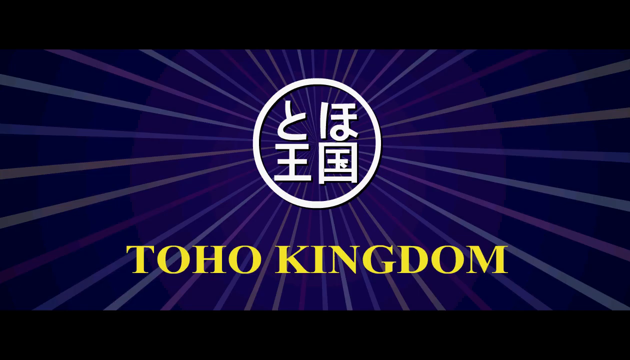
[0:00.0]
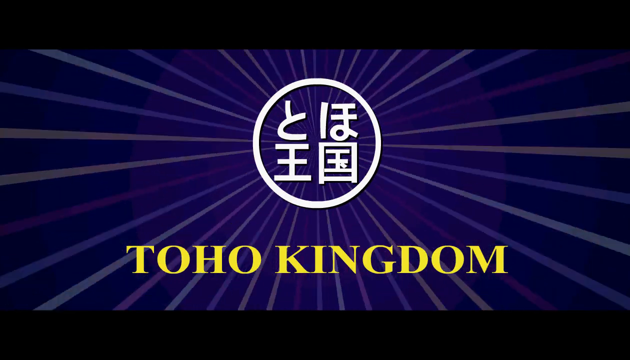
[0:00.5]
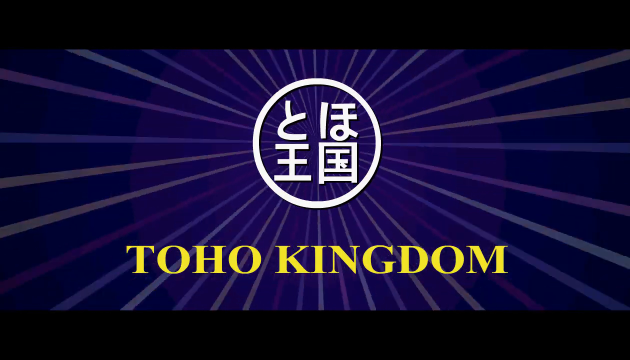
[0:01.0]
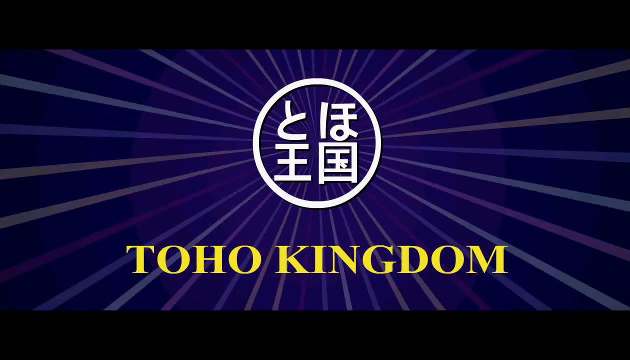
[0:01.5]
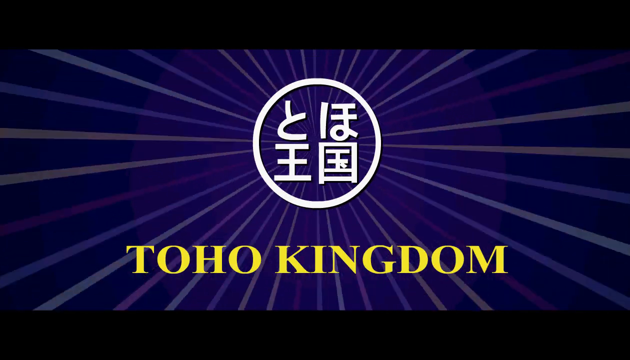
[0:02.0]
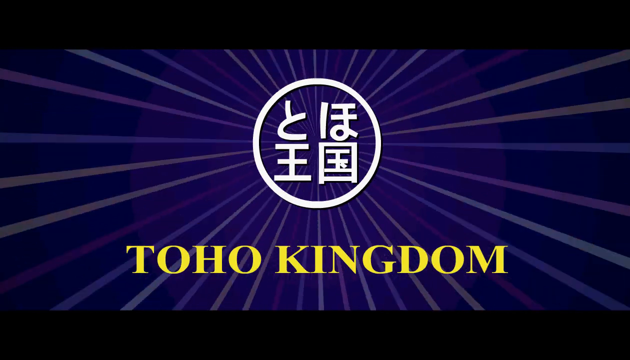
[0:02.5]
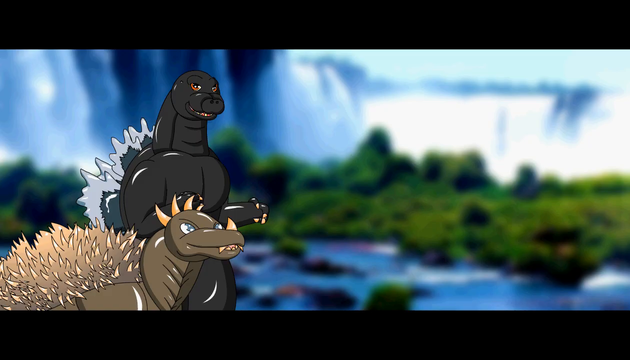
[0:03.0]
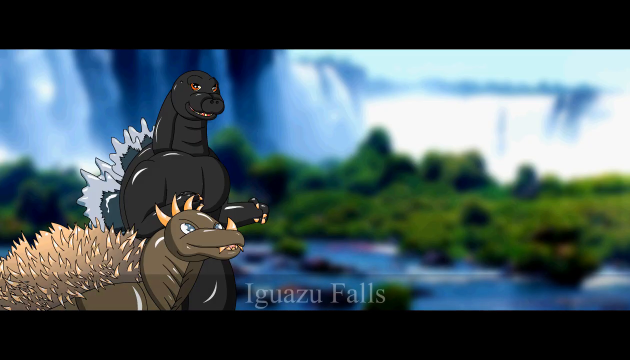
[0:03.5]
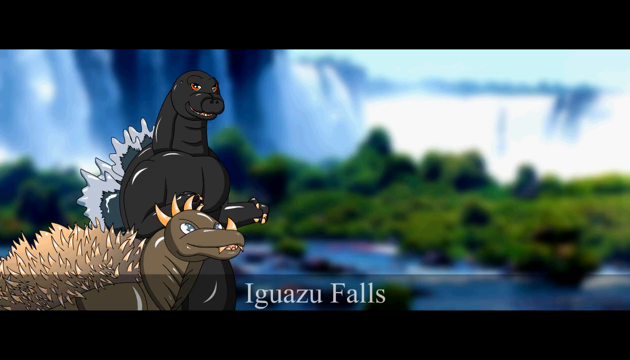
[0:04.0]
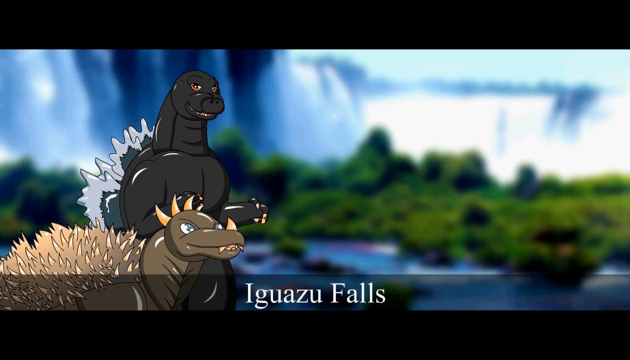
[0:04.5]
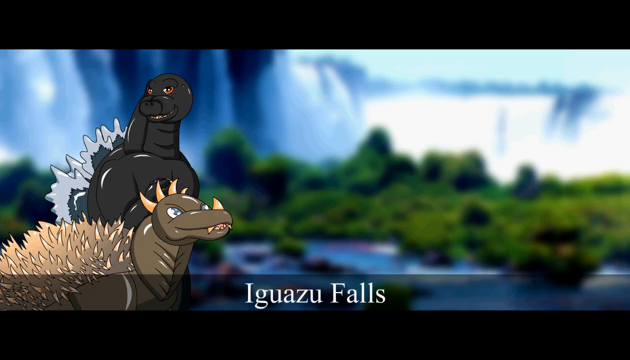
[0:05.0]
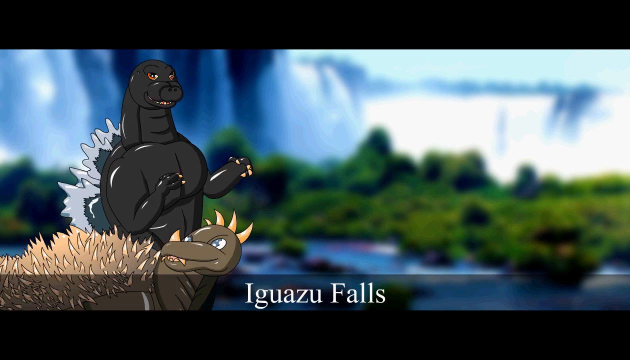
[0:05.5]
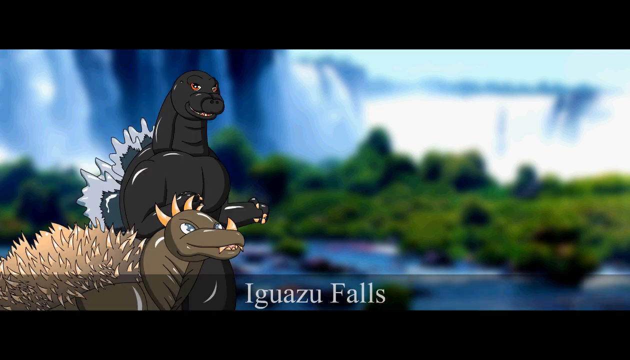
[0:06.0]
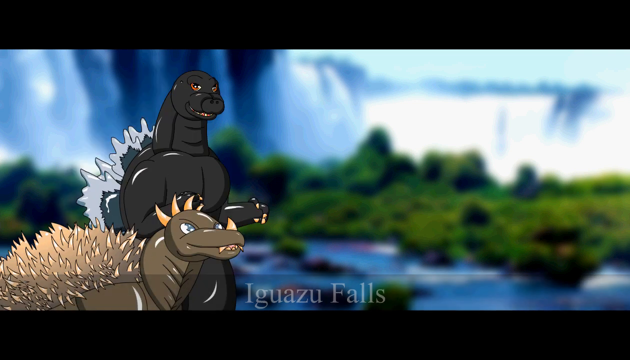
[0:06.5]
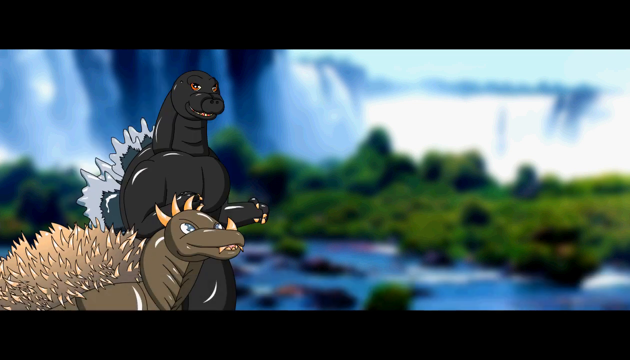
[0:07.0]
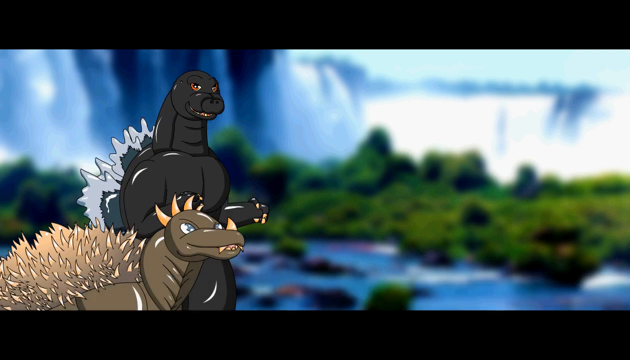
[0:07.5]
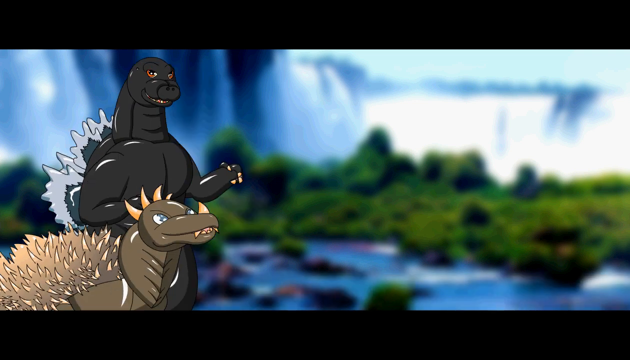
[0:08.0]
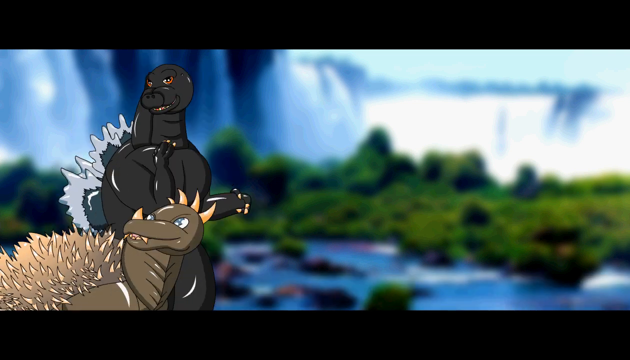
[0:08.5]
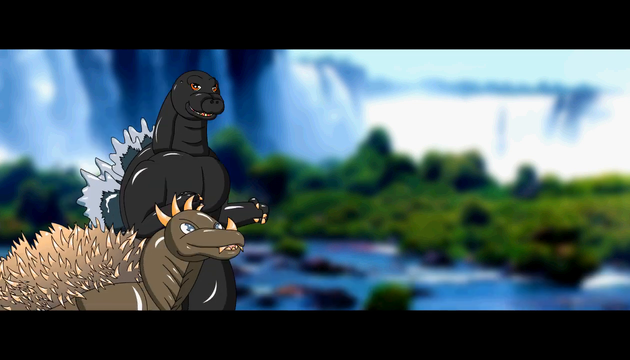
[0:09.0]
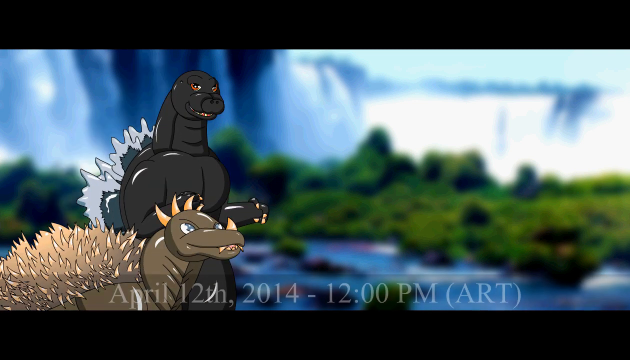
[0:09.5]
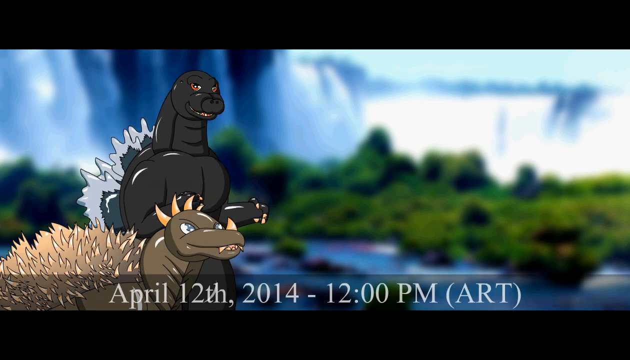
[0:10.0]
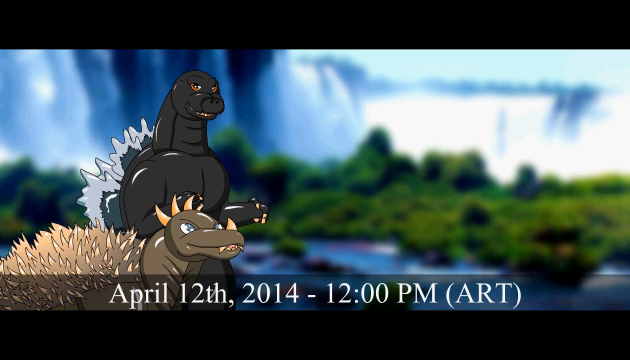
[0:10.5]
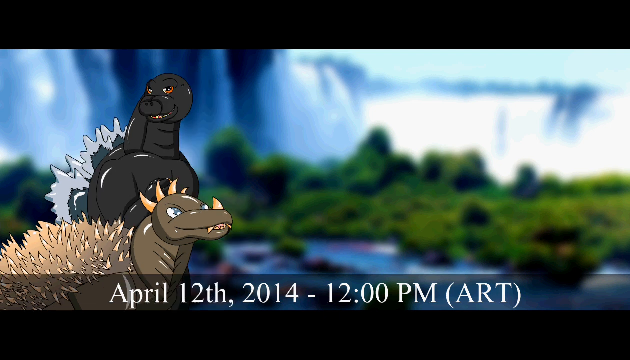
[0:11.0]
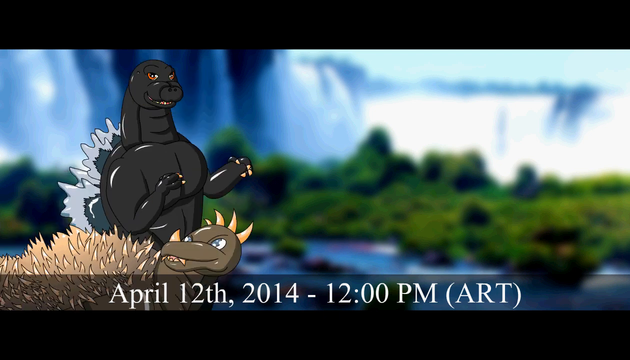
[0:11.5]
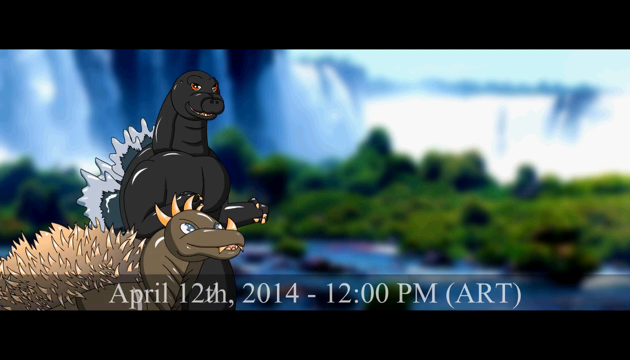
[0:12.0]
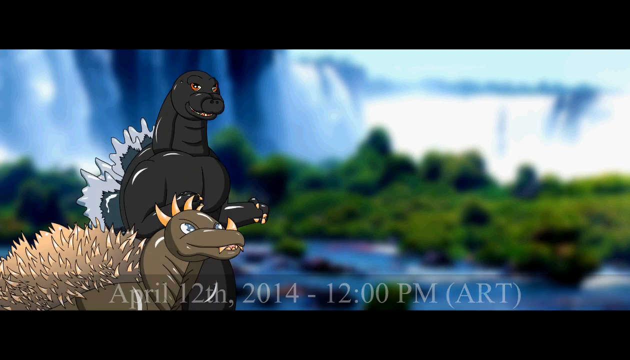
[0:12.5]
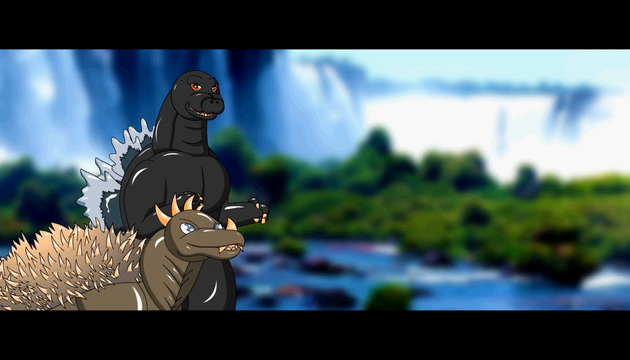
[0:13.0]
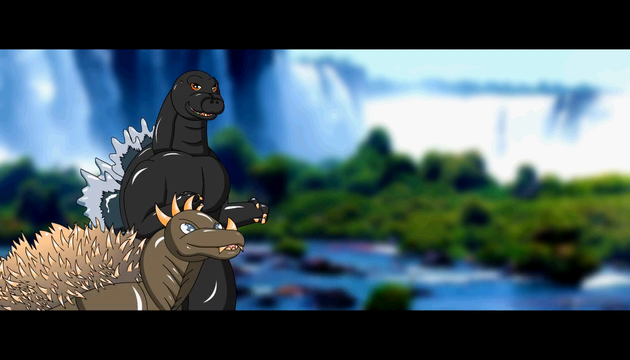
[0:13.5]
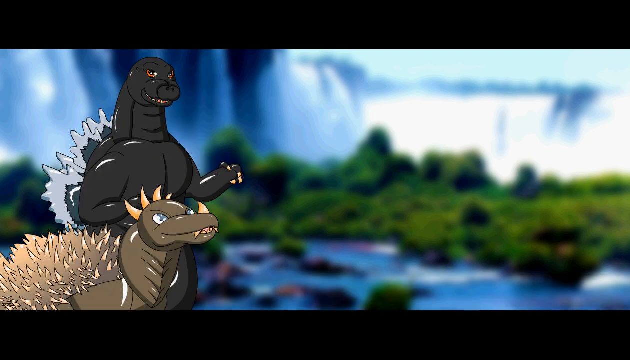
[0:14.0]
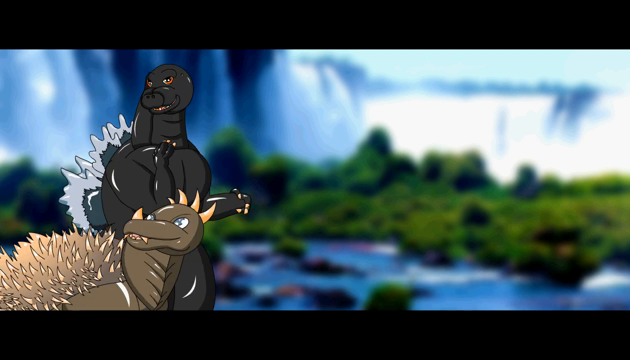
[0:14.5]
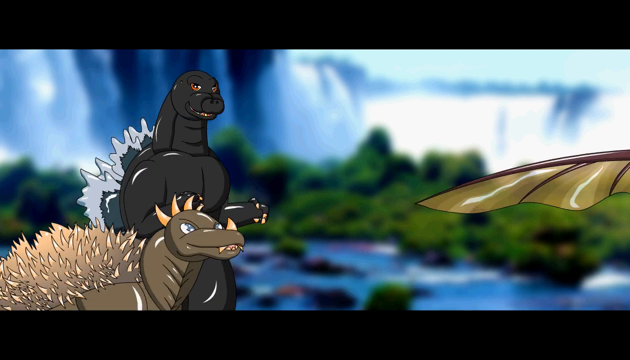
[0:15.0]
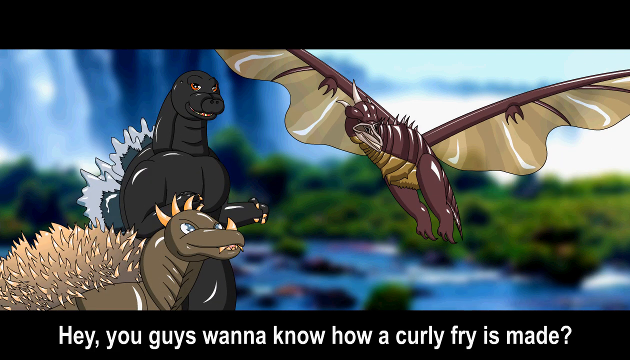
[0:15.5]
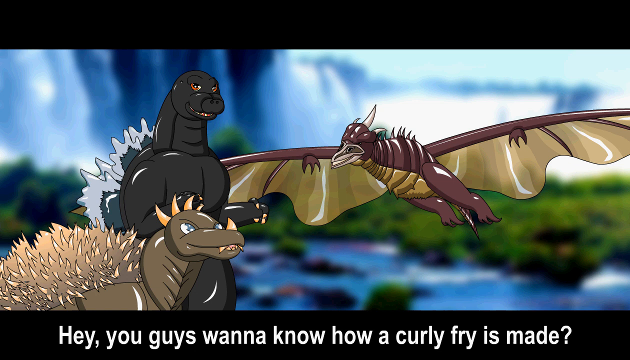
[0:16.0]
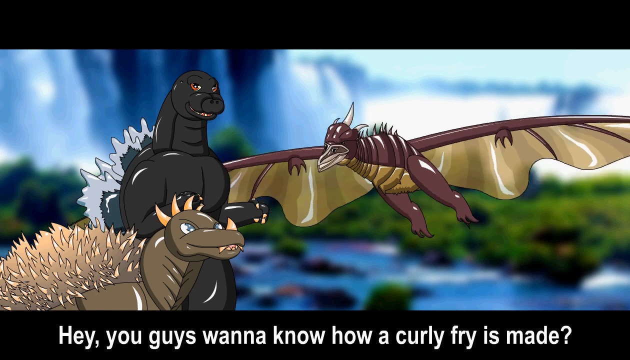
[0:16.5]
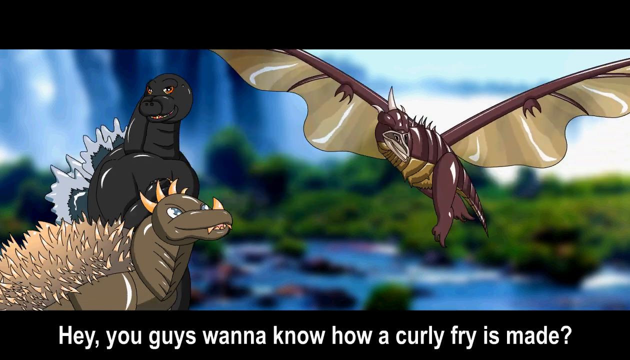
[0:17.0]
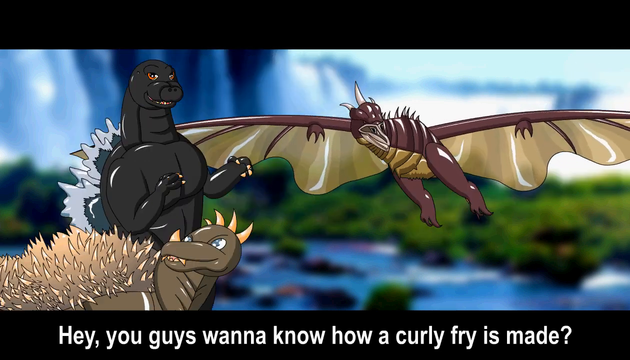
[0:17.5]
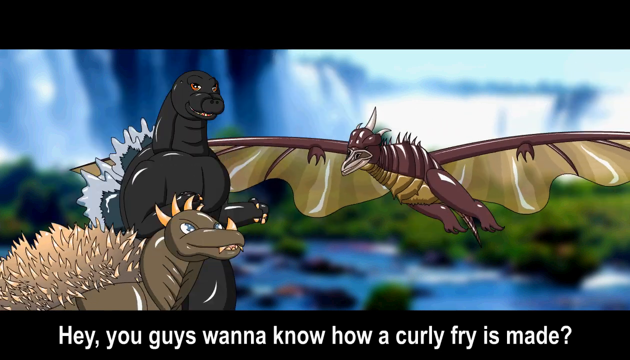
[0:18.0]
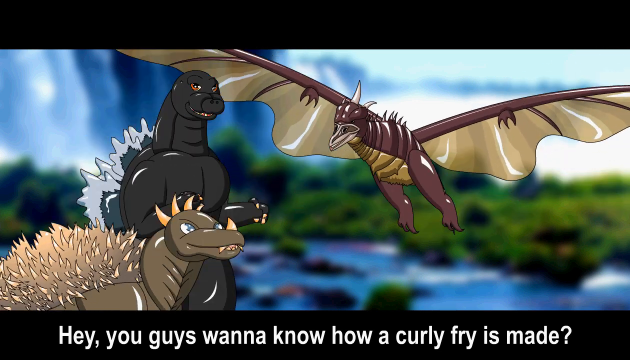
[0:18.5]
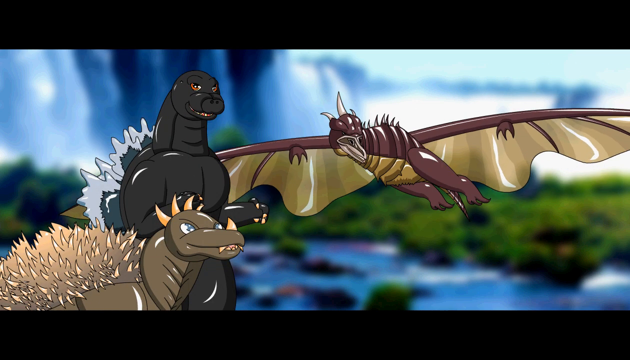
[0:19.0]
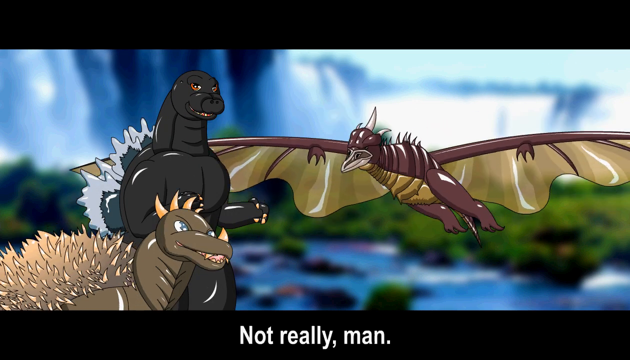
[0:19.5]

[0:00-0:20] The video appears to be amateur or fan-made animation. It opens on a splash screen with cinematic effects and rays projecting from the very center of the screen. In the center are four kanji characters within a circle outline, both in white, and right beneath them the words "Toho Kingdom" appear in bold yellow type. The video then transitions to the art of two fan-made dinosaurs. At the bottom of the screen, "Iwasu Falls" appears in thin white type, and behind the dinosaurs is what is presumably the Iwasu Falls. The dinosaurs move a bit, looking to the left and right. Another line of thin white text appears at the bottom of the screen, reading "April 12, 2013, 12 p.m." A flying dinosaur then appears and asks the other two, in a strip of text at the bottom of the screen, "Hey, you guys want to know how a curly fry is made?" The text that follows is apparently another dinosaur's answer, "Not really man," and one of the first two dinosaurs is seen muttering something.